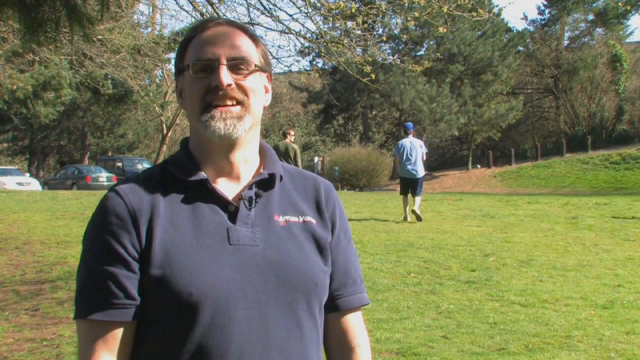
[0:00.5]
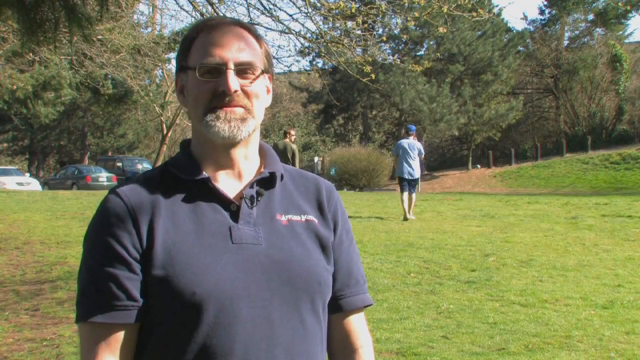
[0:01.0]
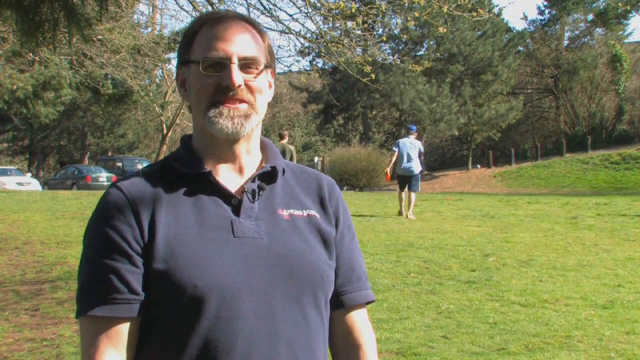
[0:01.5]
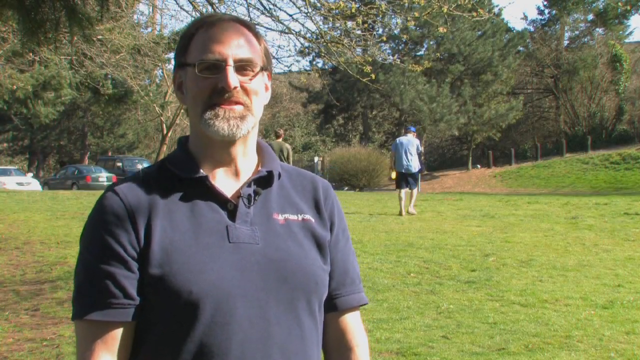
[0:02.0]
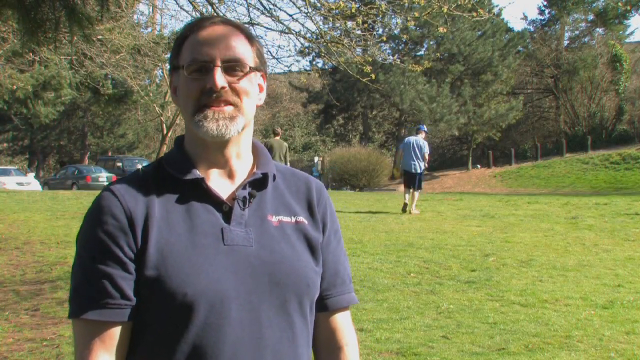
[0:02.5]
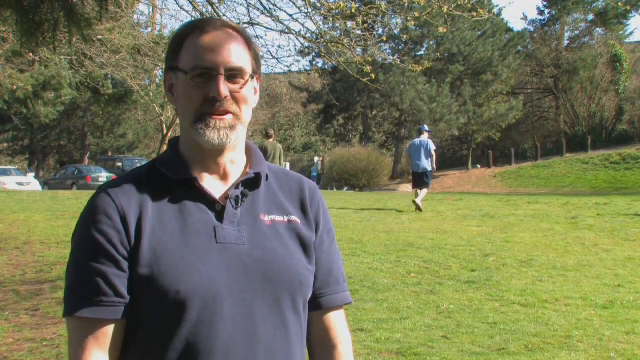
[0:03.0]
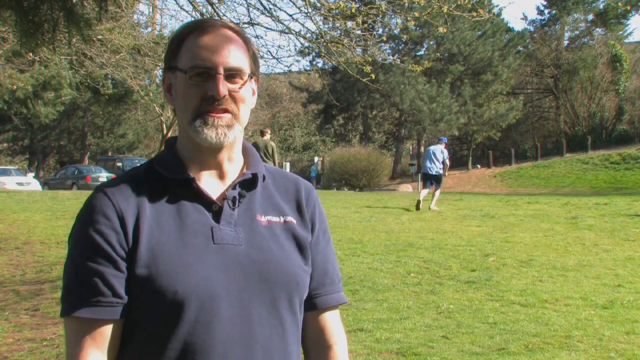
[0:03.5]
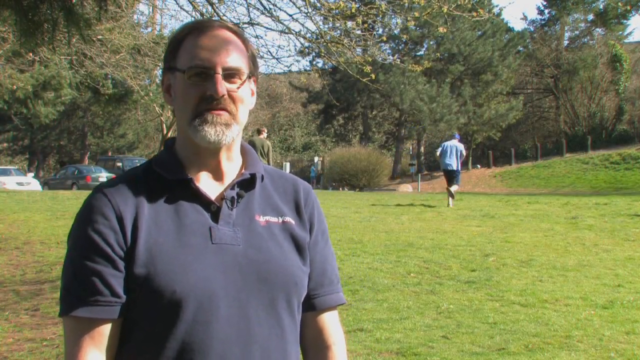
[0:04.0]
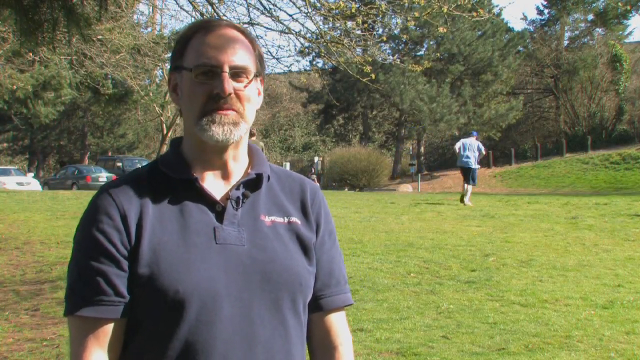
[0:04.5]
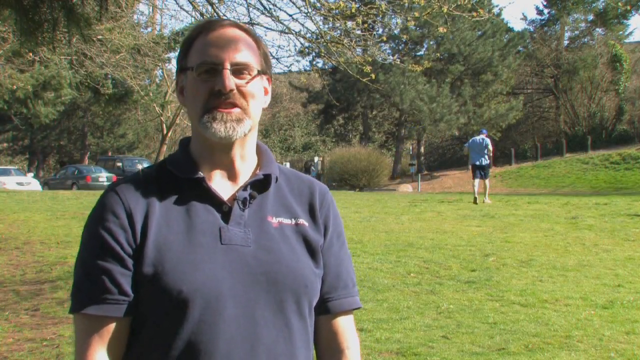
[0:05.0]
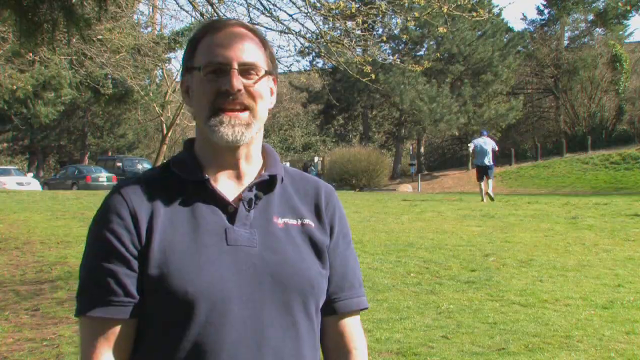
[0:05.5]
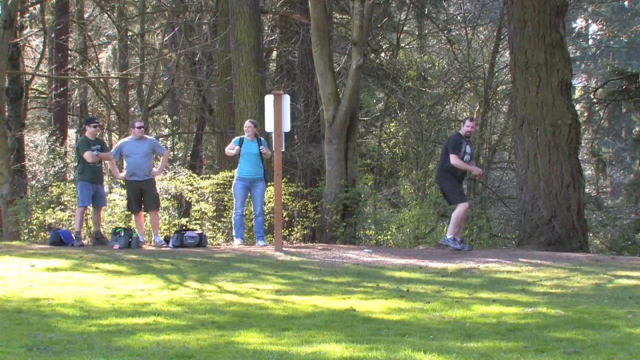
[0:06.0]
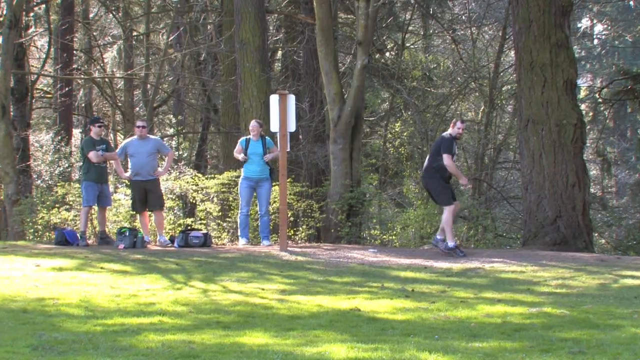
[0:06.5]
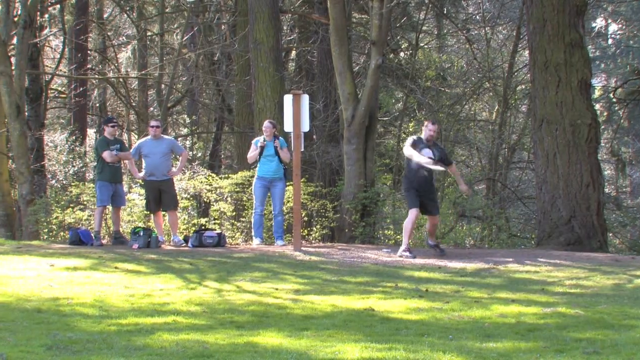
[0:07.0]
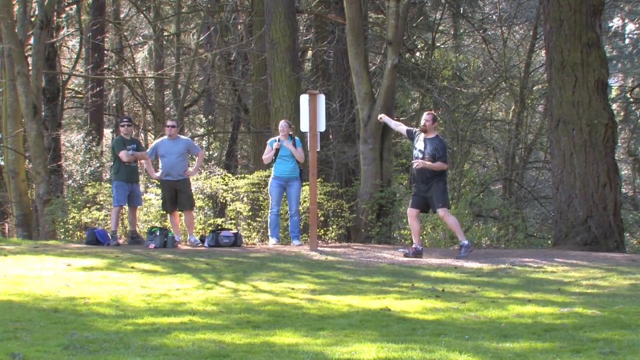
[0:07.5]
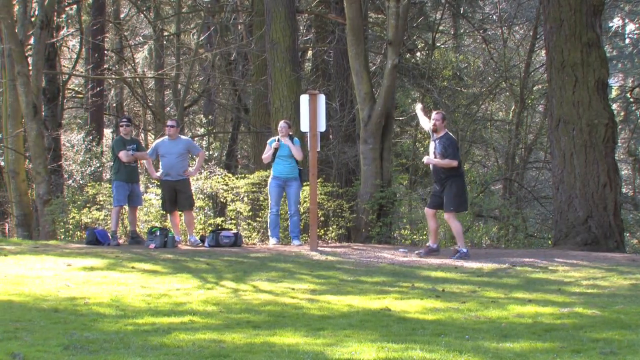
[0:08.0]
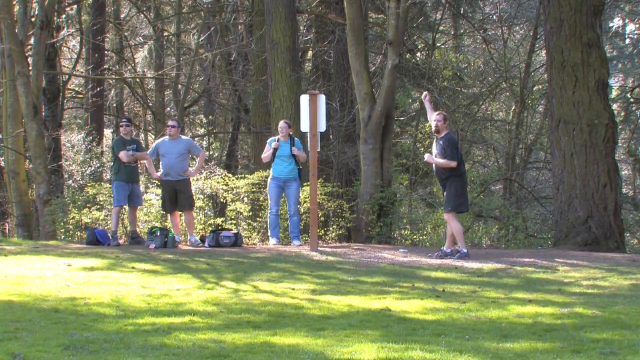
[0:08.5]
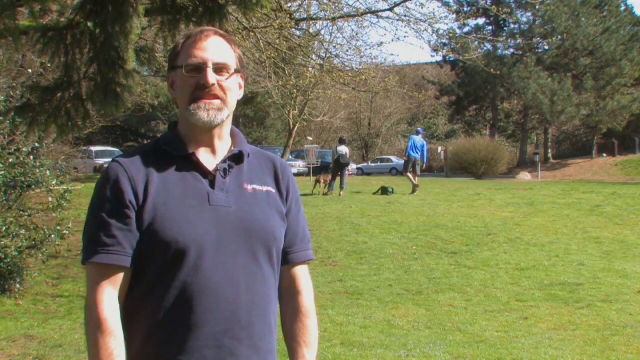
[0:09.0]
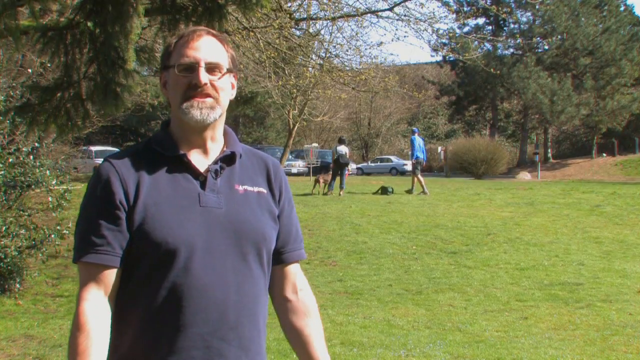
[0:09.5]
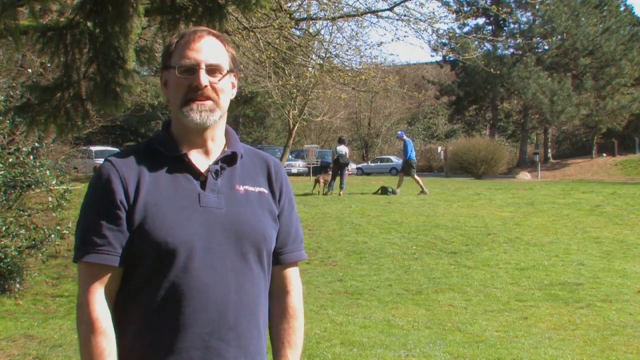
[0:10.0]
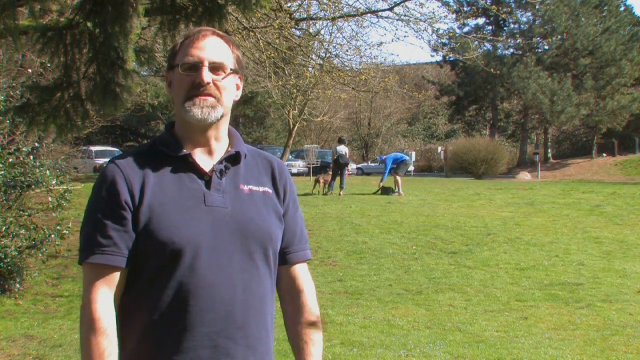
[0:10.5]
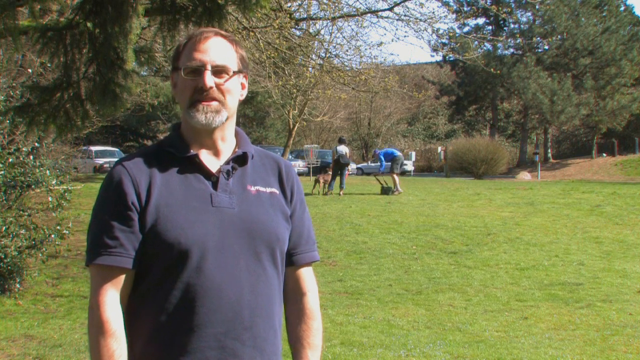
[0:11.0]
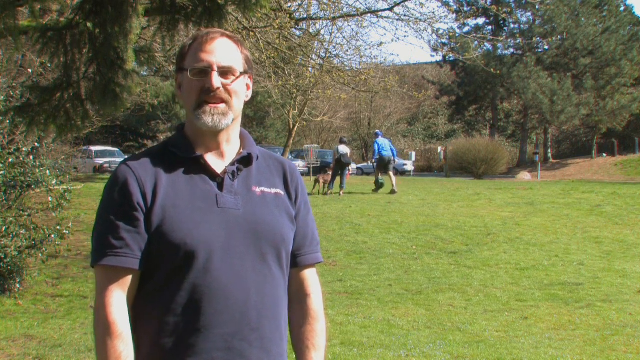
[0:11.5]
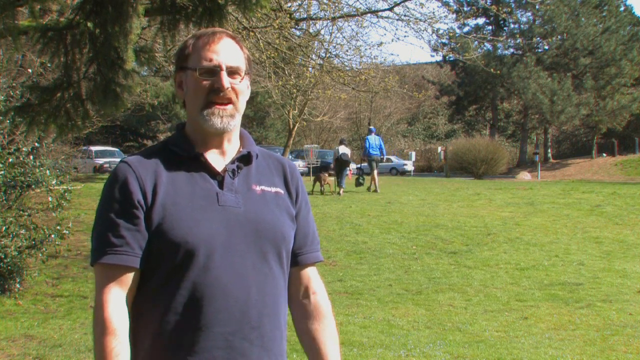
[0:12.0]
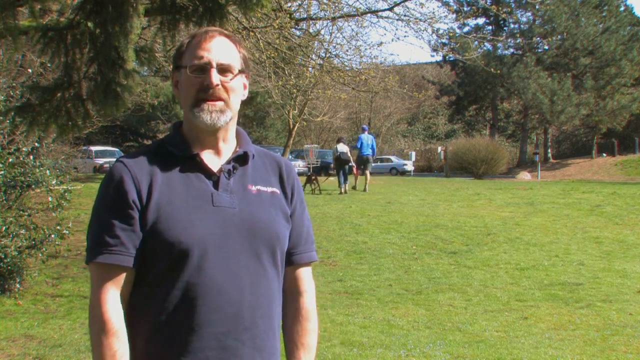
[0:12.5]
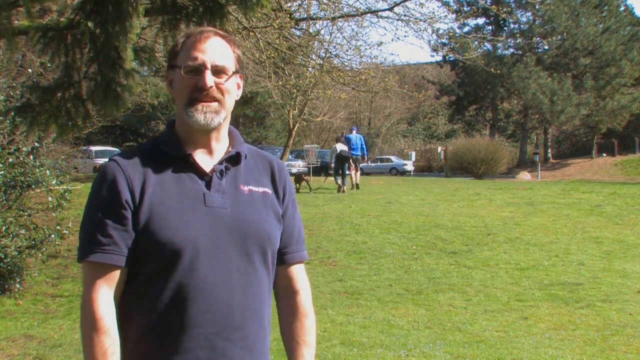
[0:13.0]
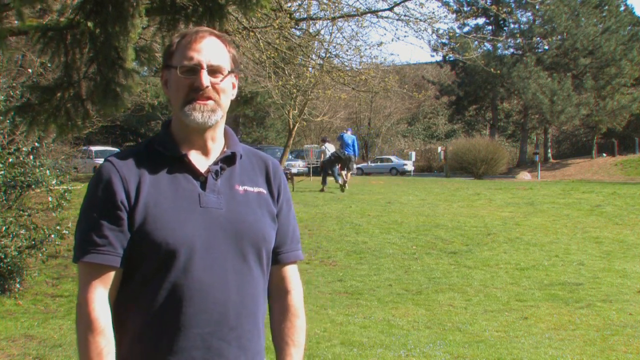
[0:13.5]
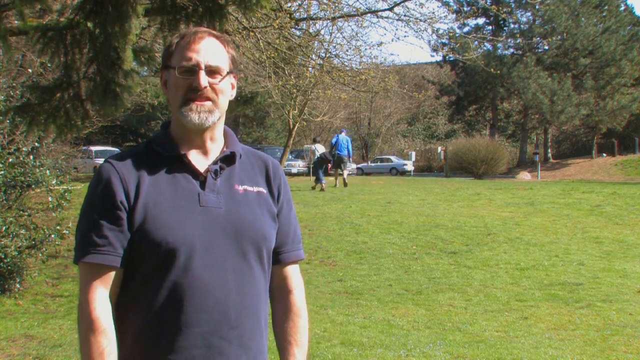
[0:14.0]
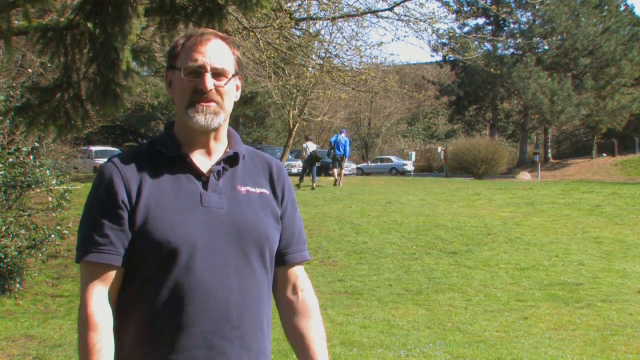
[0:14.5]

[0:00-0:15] A man talks to the camera in what seems to be a community park. In the background people are playing frisbee, someone is walking their dog, a jogger goes by, and people are carrying bags. He seems happy about what he is explaining. A white logo is in the bottom right corner of the screen. The man wears a blue polo shirt with a white logo on the chest and dark green glasses, and looks to be around his mid-fifties. It is a sunny day, apparently summer or fall, and there seem to be cars in the parking lot behind him. A path runs in the background behind the man, and people seem to be dressed comfortably in t-shirts and shorts.